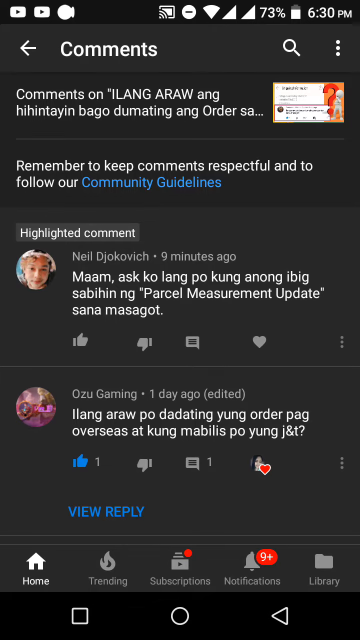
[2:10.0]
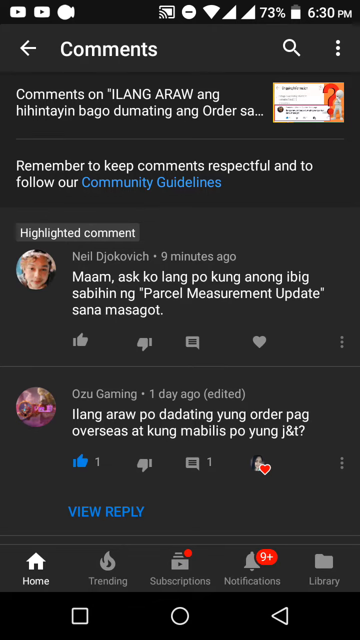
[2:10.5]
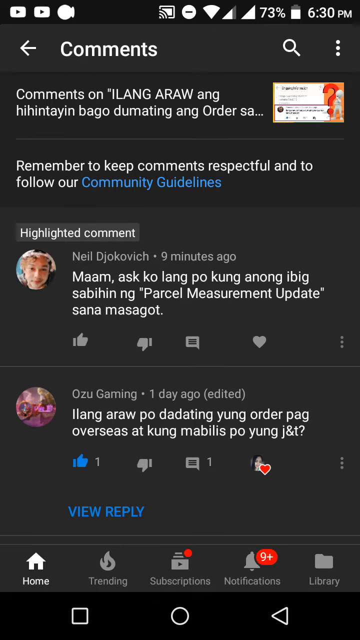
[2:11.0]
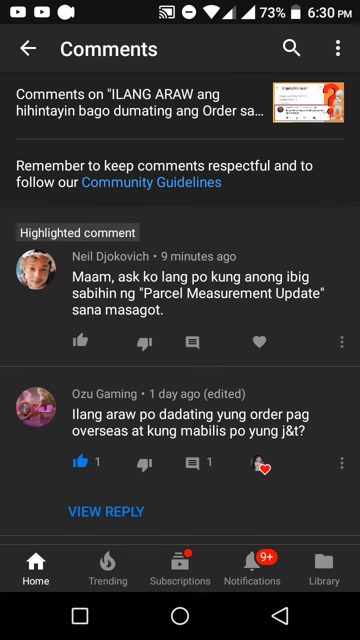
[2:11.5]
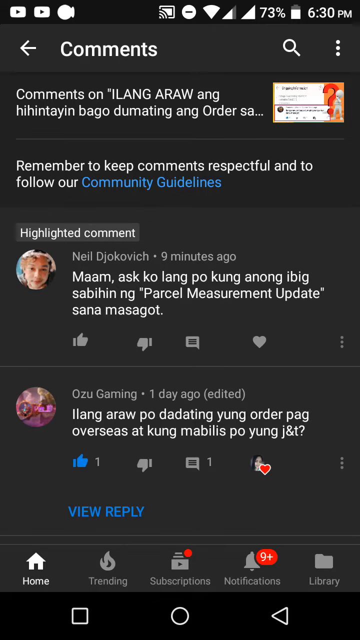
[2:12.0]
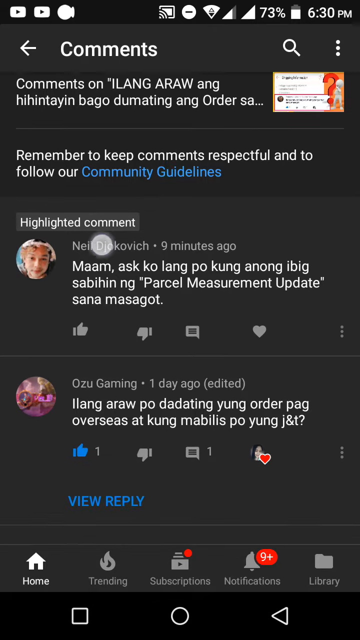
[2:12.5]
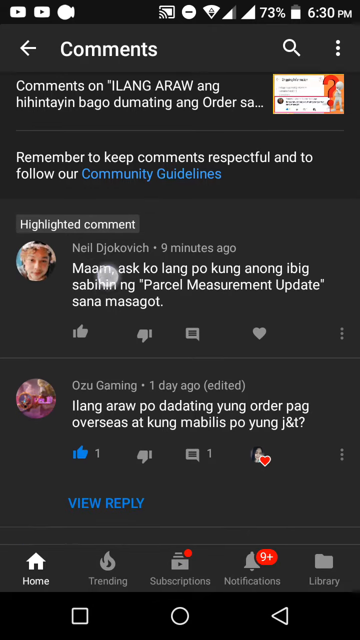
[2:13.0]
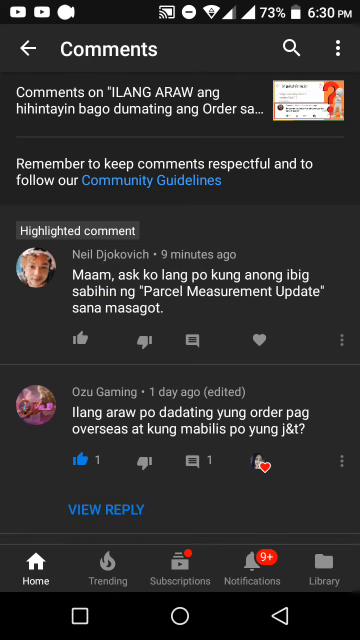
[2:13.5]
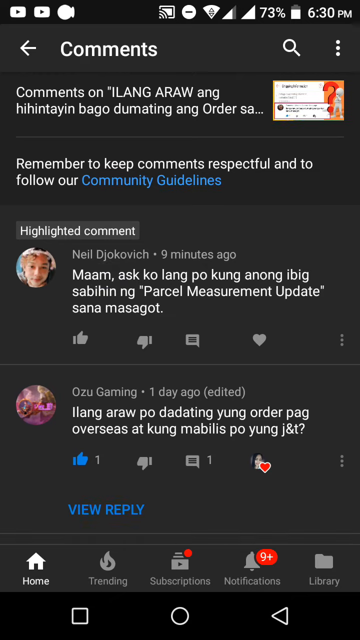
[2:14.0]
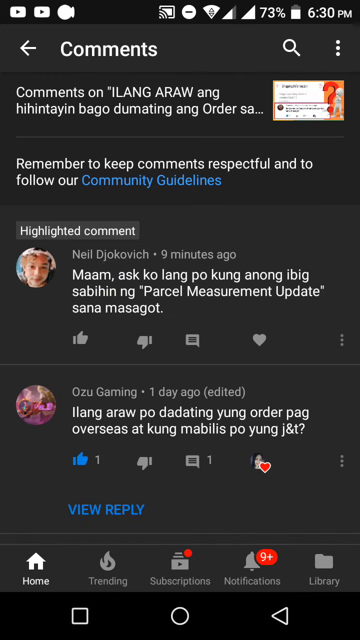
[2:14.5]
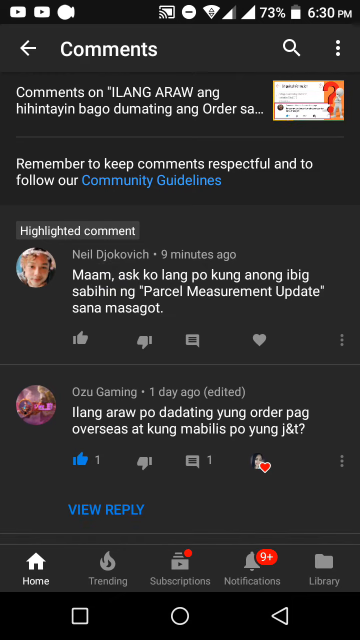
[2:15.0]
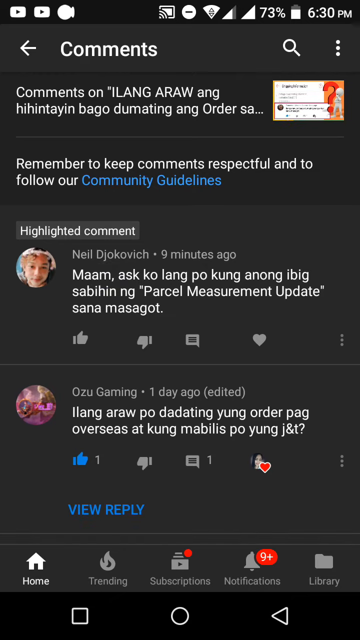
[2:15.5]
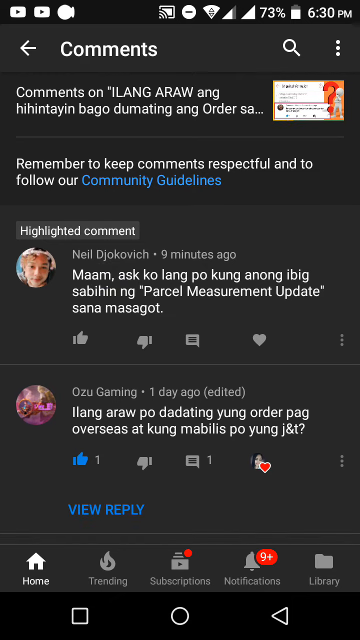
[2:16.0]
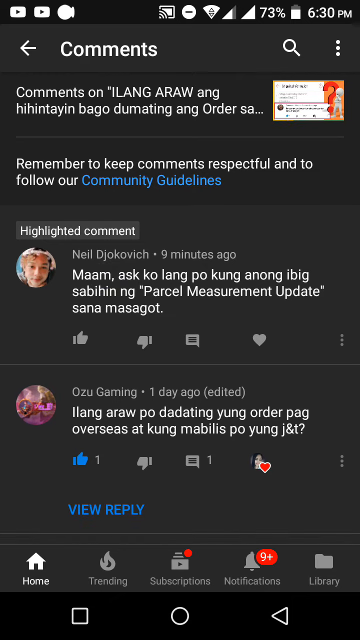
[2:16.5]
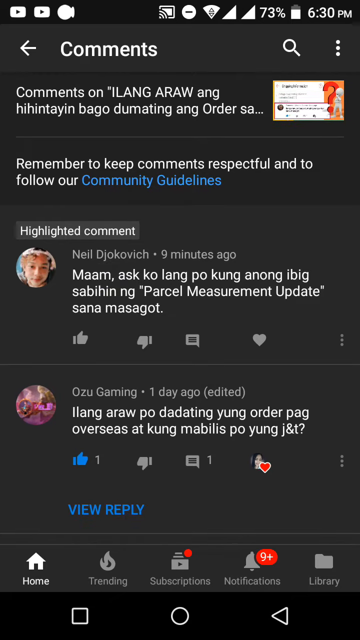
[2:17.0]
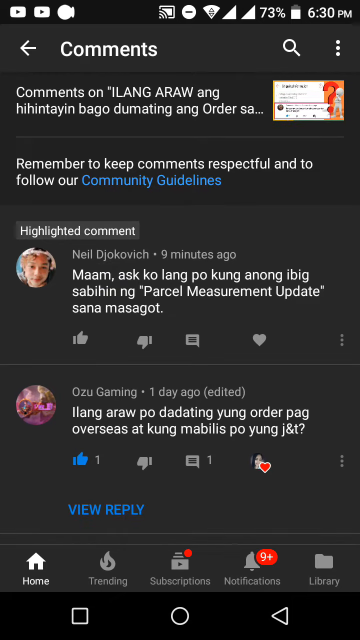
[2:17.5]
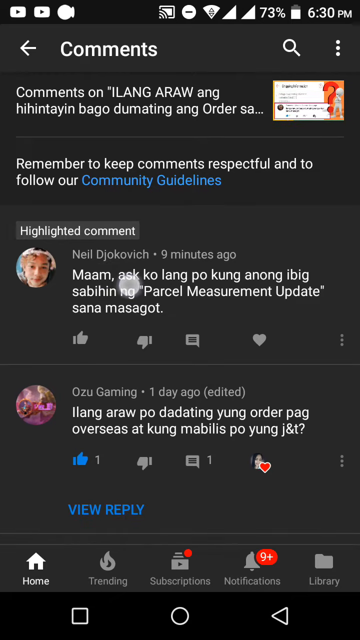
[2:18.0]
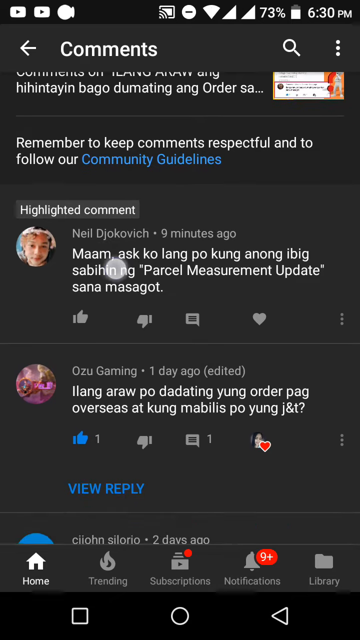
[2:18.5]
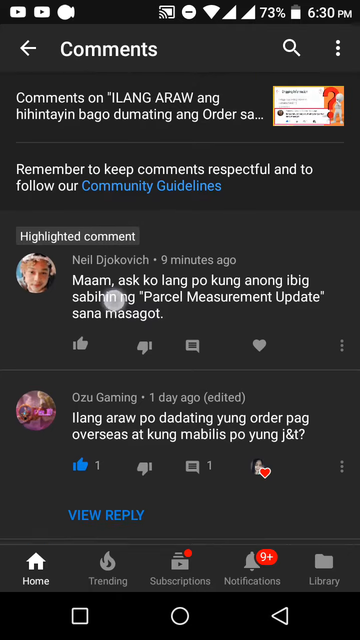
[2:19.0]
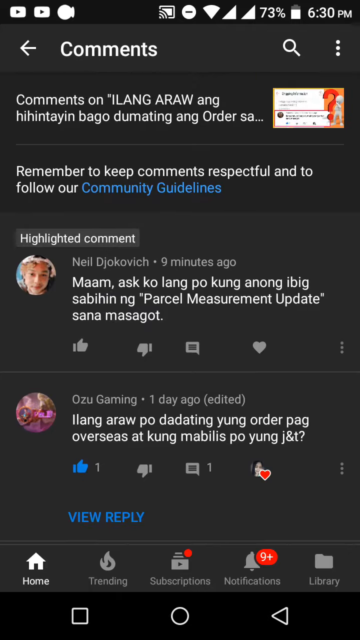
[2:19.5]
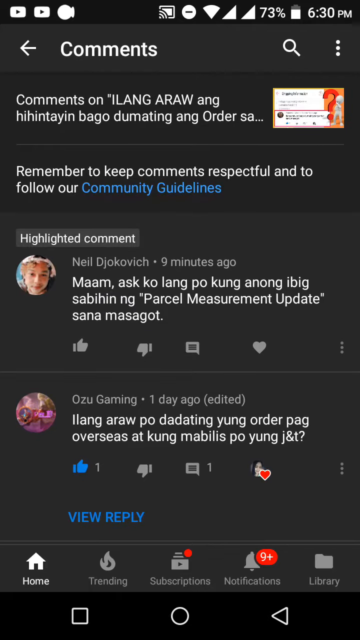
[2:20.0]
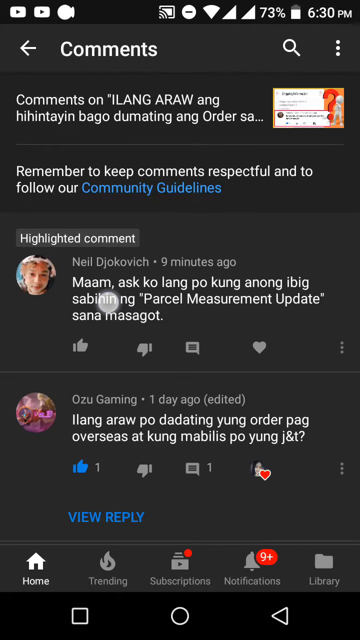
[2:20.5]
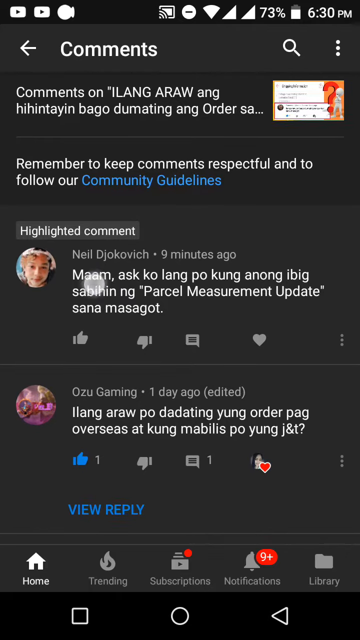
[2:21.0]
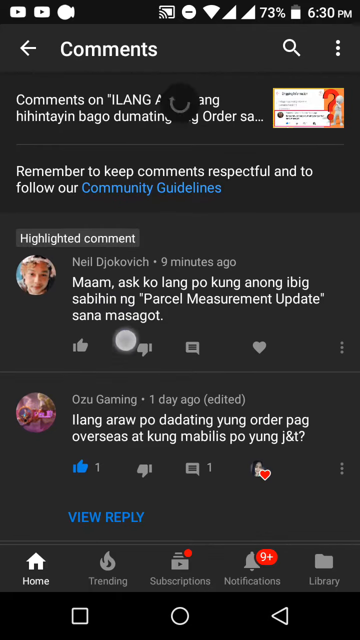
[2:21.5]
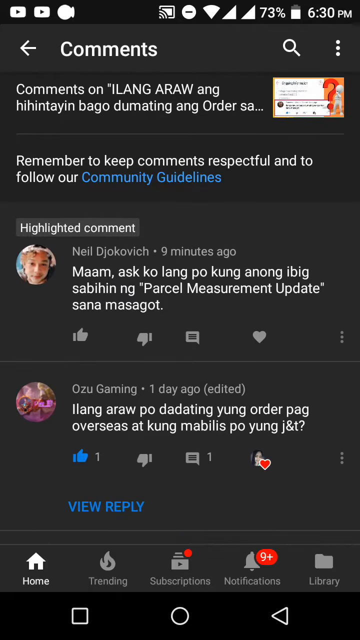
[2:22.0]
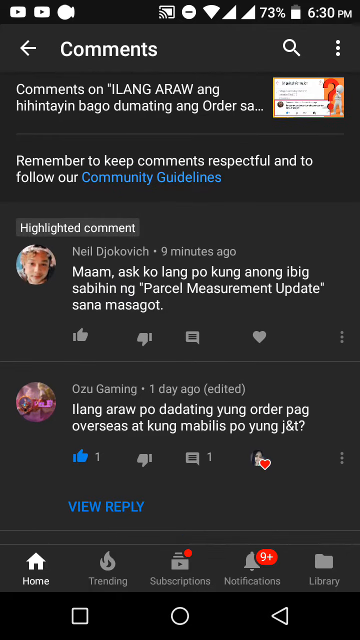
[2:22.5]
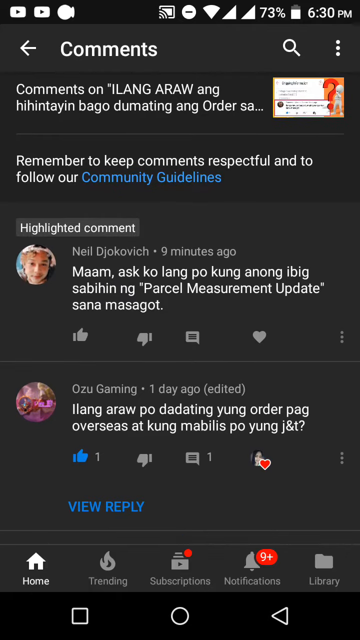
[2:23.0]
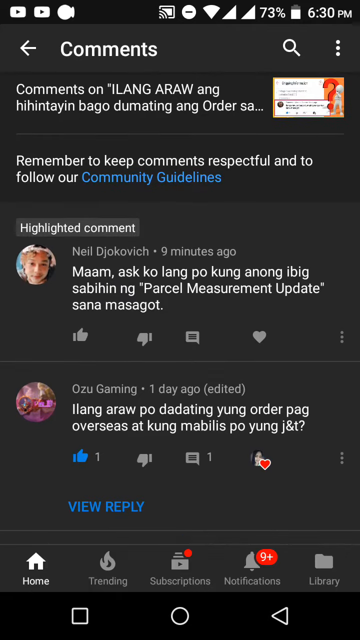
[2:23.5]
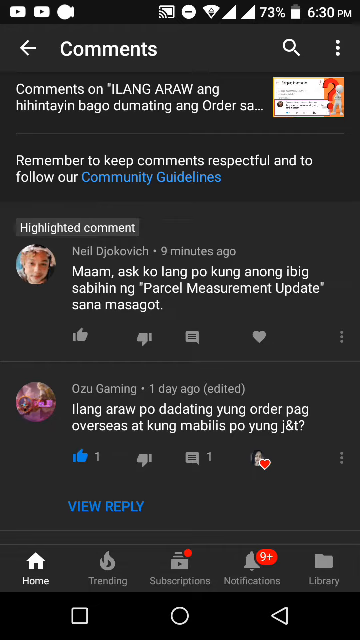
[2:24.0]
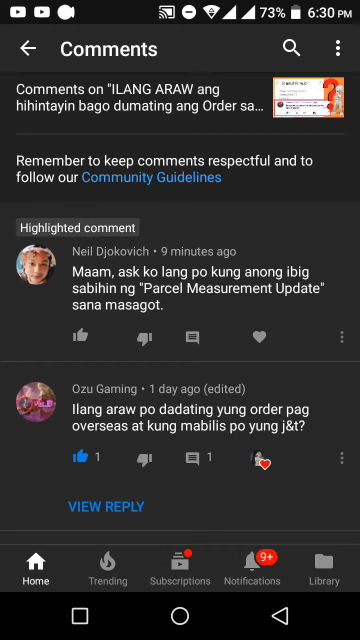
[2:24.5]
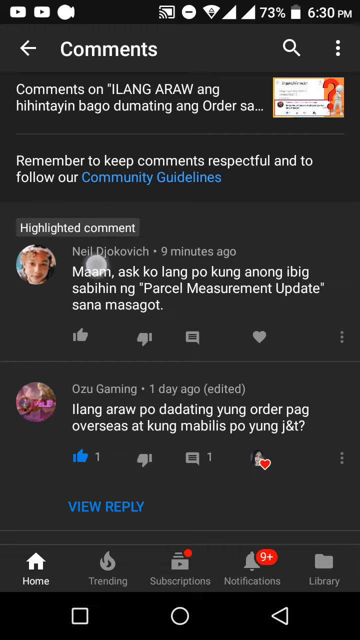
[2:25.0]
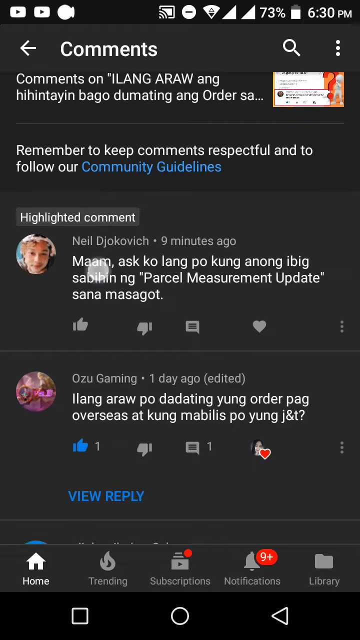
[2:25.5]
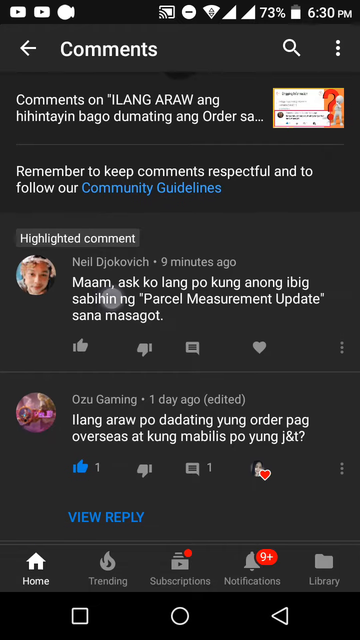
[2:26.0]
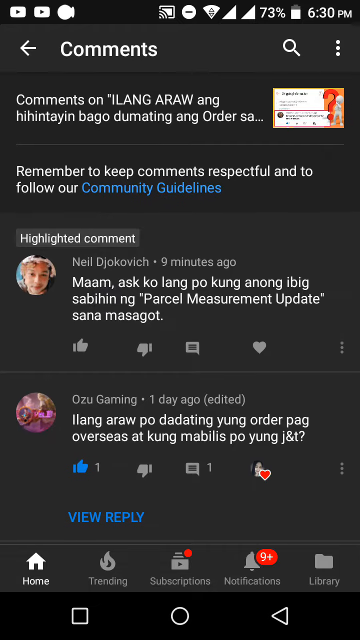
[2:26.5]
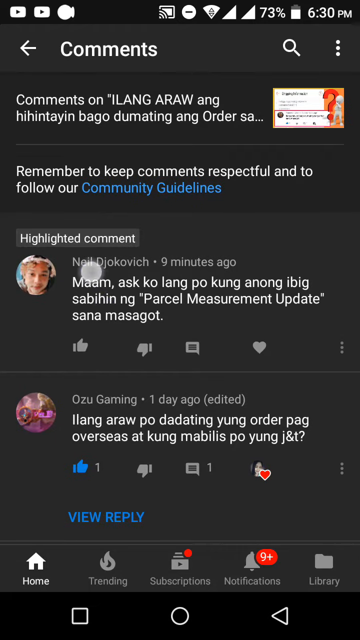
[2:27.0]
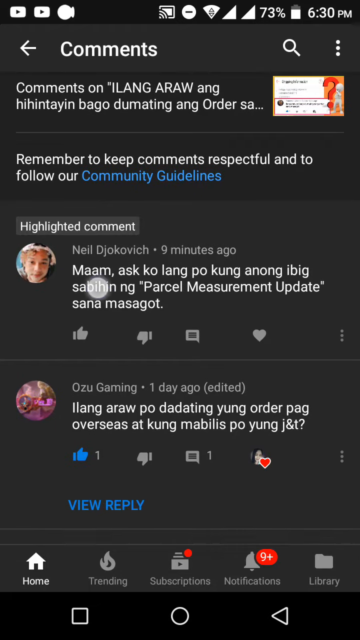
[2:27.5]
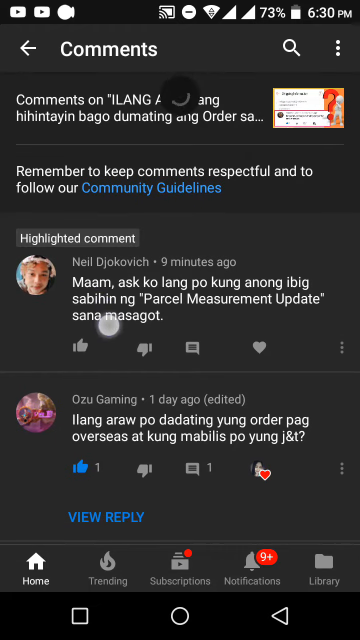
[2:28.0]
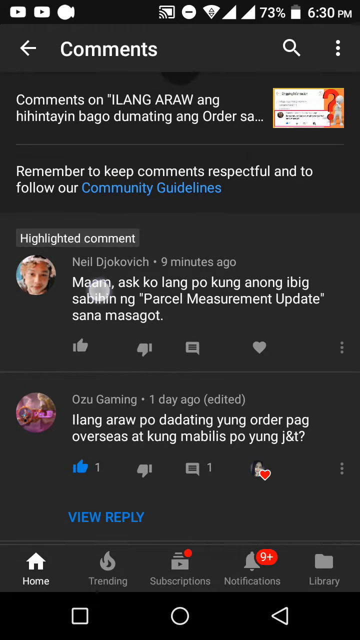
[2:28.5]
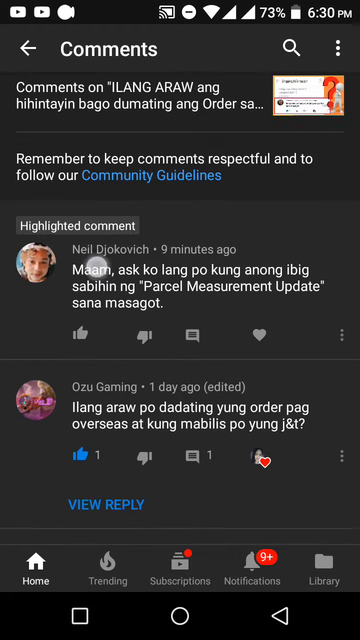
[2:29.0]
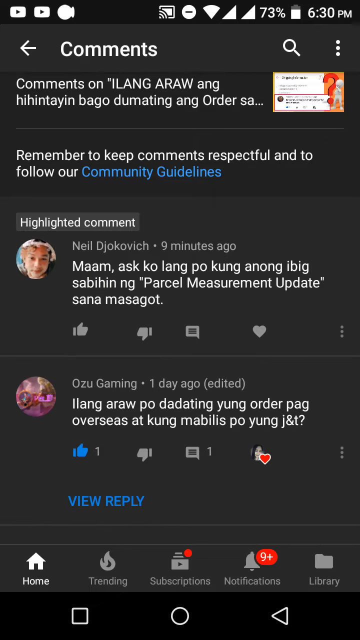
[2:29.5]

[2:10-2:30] A mobile device screen has a dark gray background, with all the text in white except for about three to four words. Across the top, from left to right, are two YouTube icons, and on the right side the battery icon and the time, 6:30 PM. The page header says "comments" in white, with a back arrow pointing to the left, and on the right side is a search icon and three vertical dots. There are two comments on the screen, all written in a foreign language. Above the comments, written in English, it says "remember to keep comments respectful and to follow our community guidelines." Below that is a highlighted comment from Neil Djokovic, and below it another comment from Ozu Gaming, both in a foreign language. After a few seconds, a round mouse tracker appears over the top comment, tries to scroll the page up and then returns it to the normal position. It does this twice and then disappears.